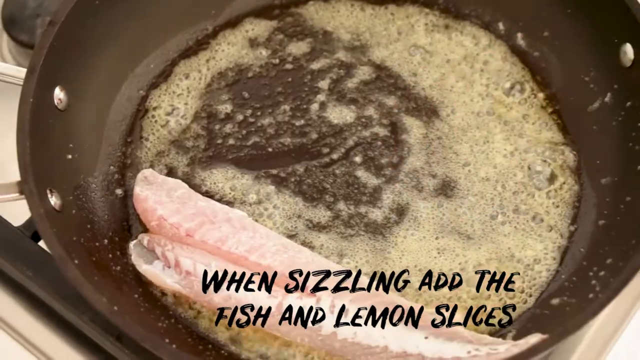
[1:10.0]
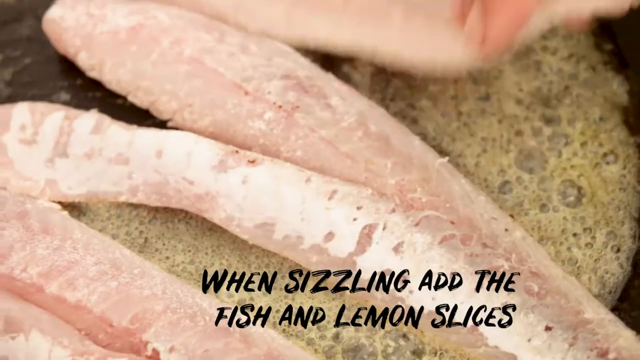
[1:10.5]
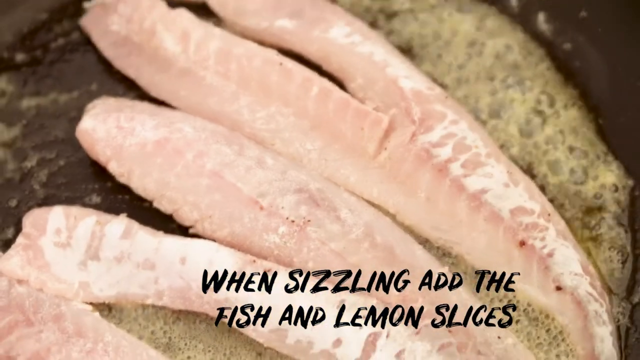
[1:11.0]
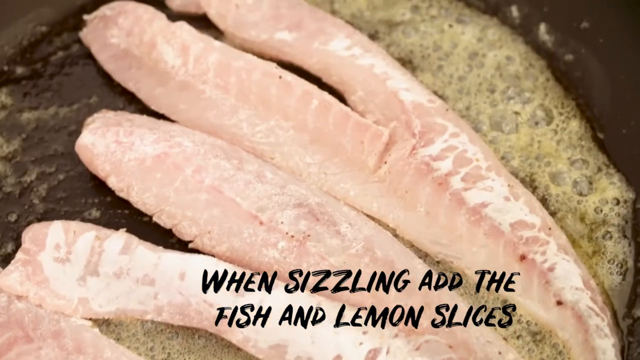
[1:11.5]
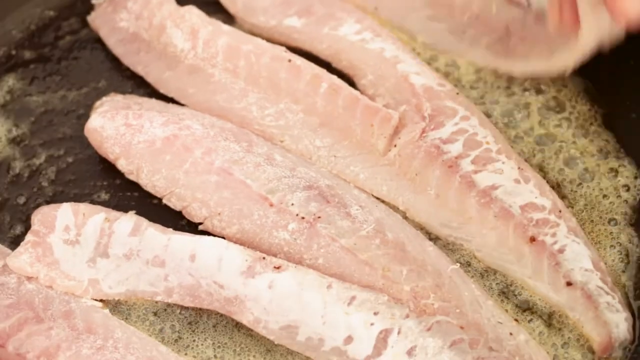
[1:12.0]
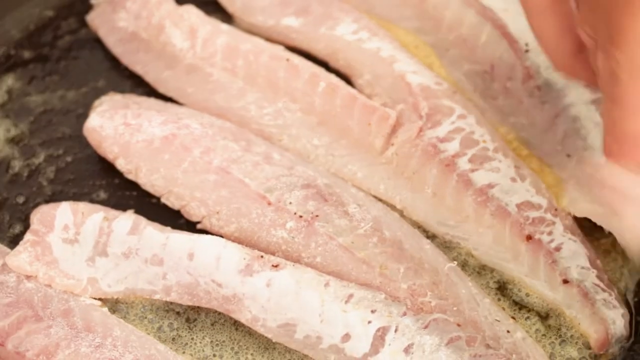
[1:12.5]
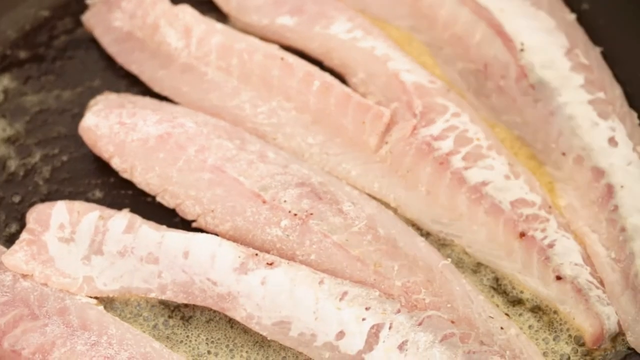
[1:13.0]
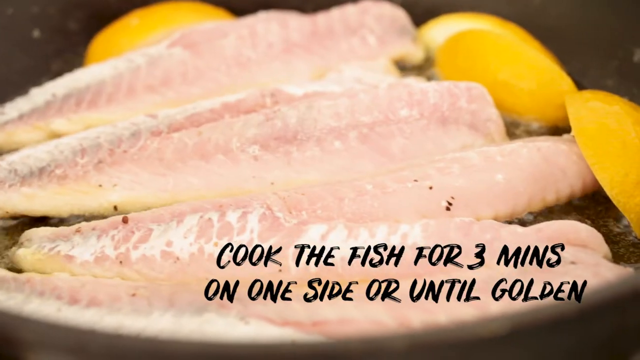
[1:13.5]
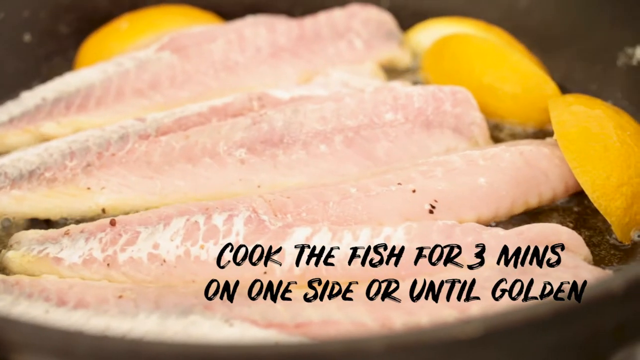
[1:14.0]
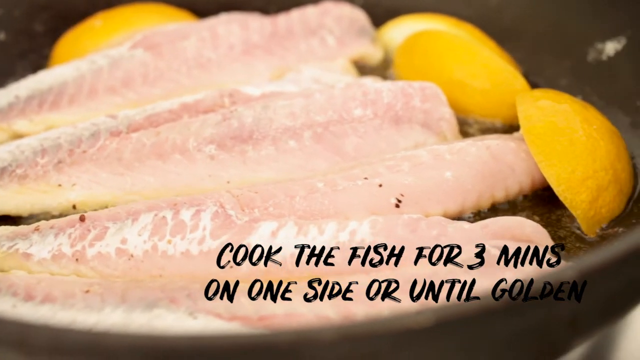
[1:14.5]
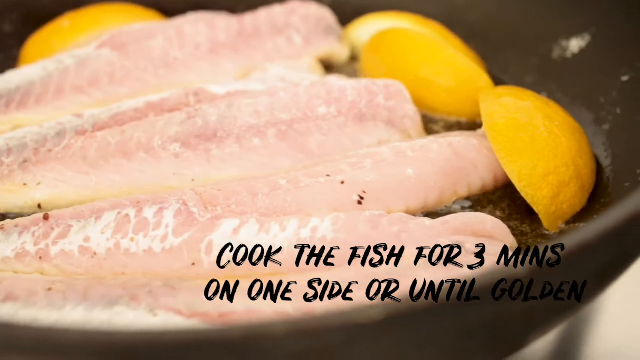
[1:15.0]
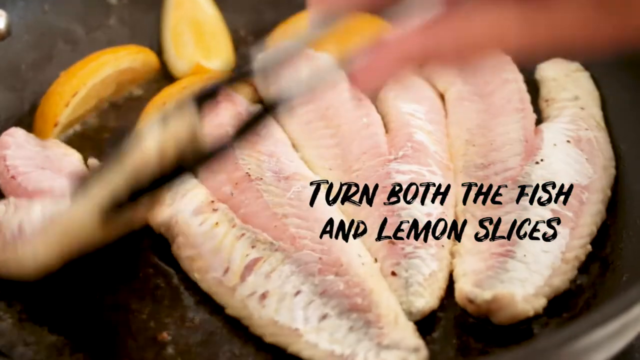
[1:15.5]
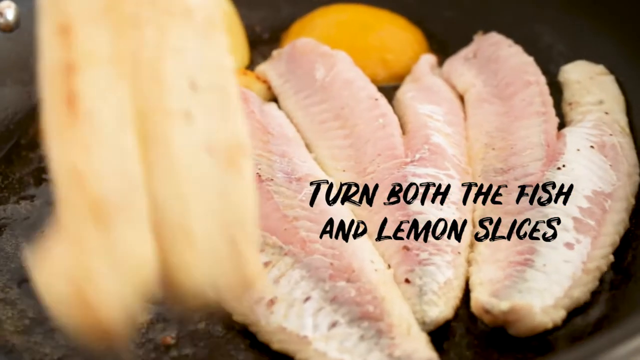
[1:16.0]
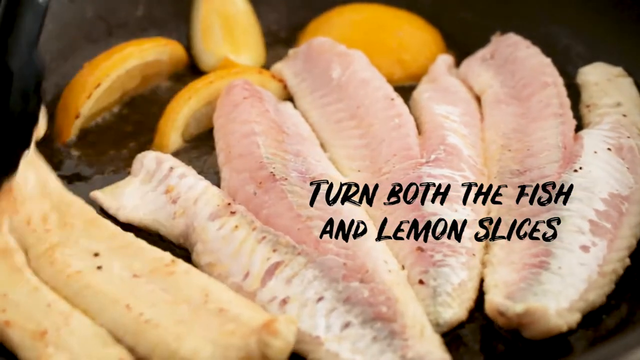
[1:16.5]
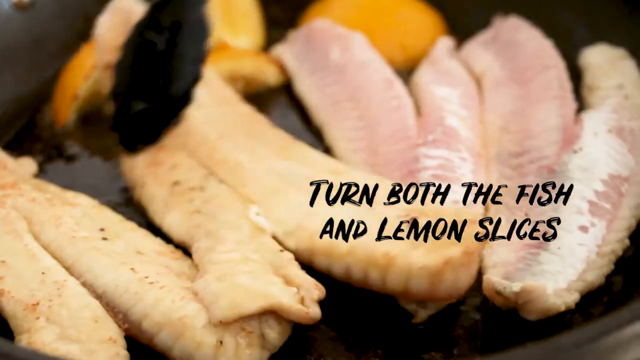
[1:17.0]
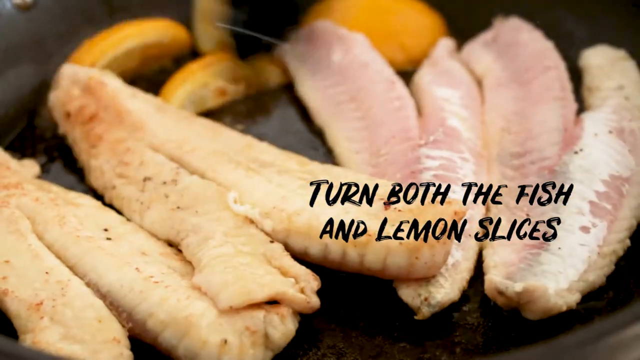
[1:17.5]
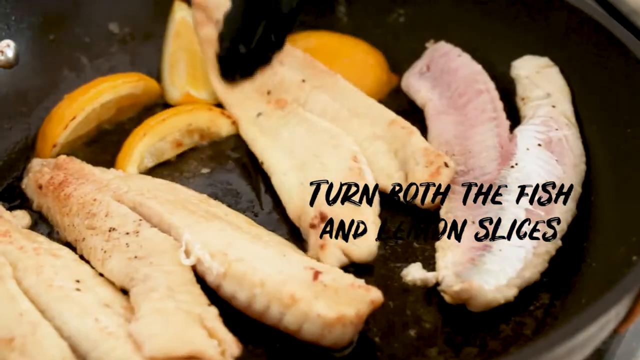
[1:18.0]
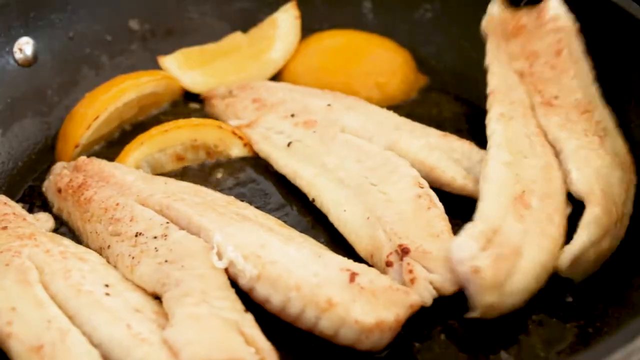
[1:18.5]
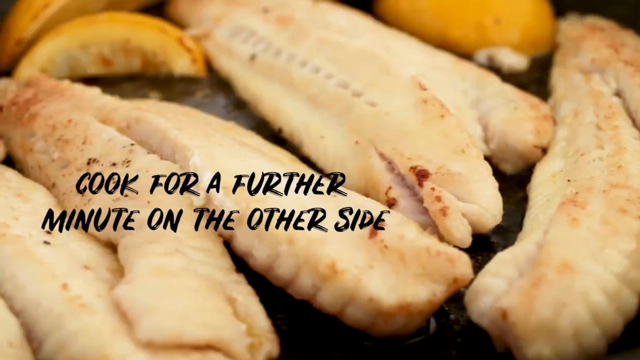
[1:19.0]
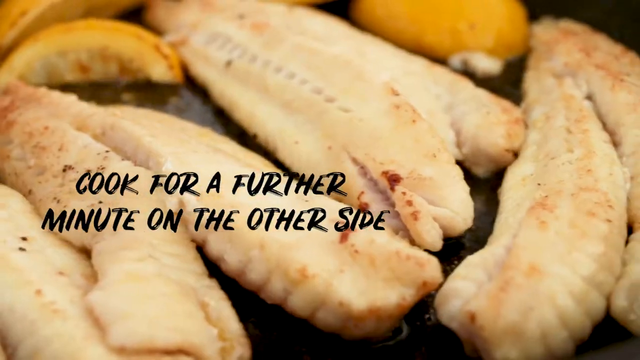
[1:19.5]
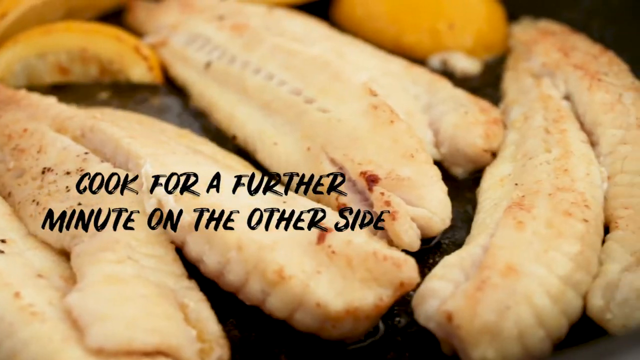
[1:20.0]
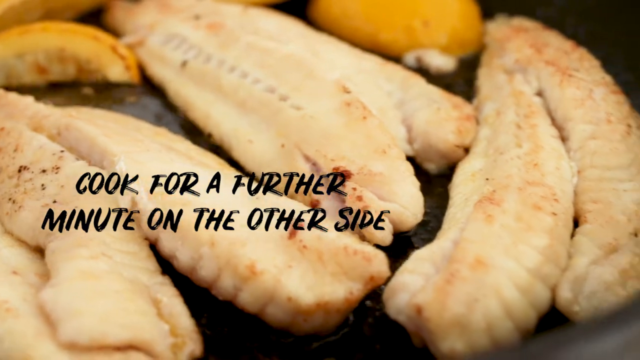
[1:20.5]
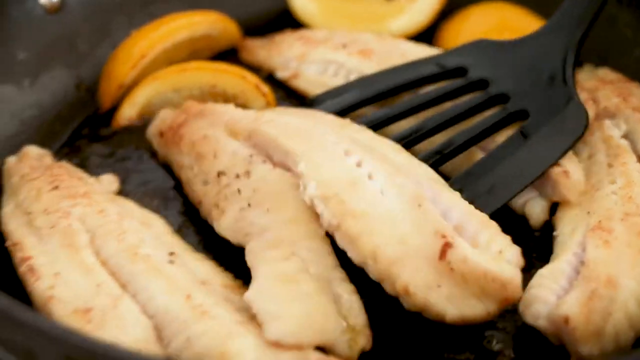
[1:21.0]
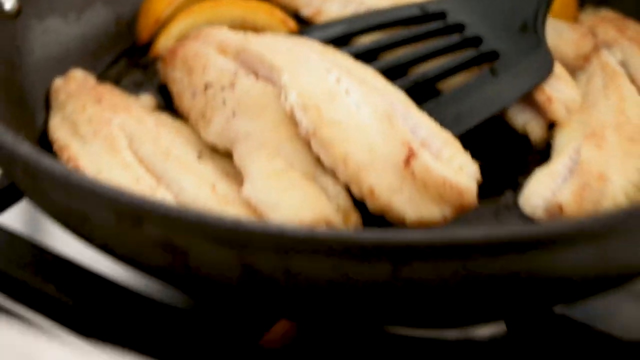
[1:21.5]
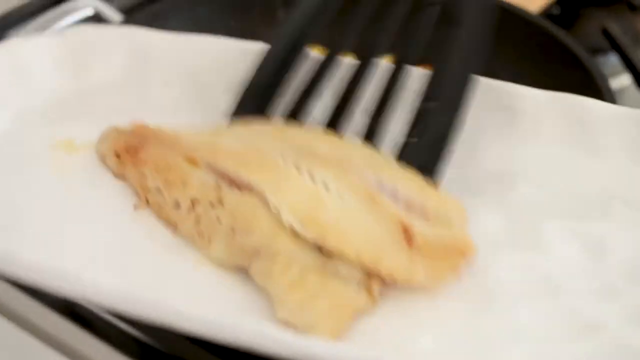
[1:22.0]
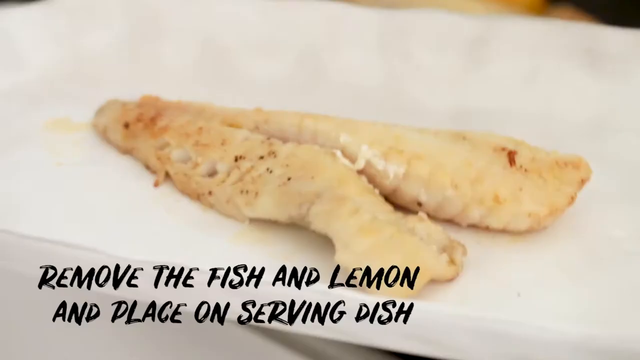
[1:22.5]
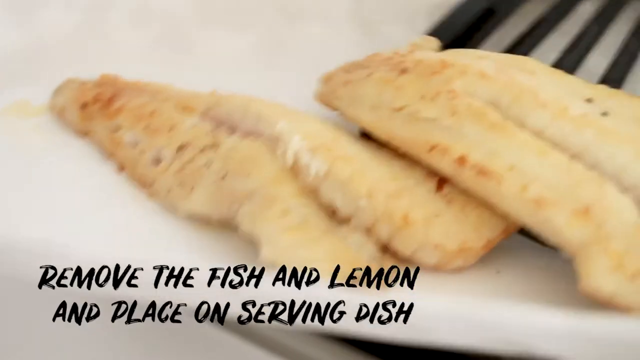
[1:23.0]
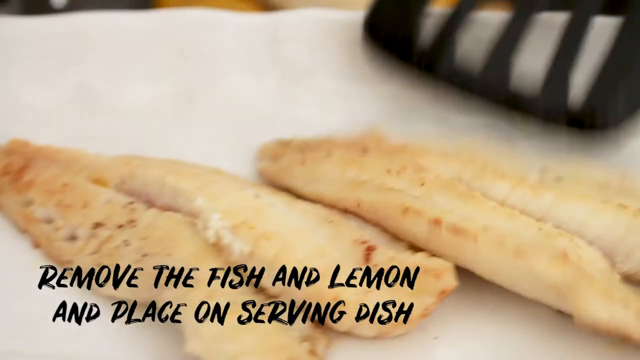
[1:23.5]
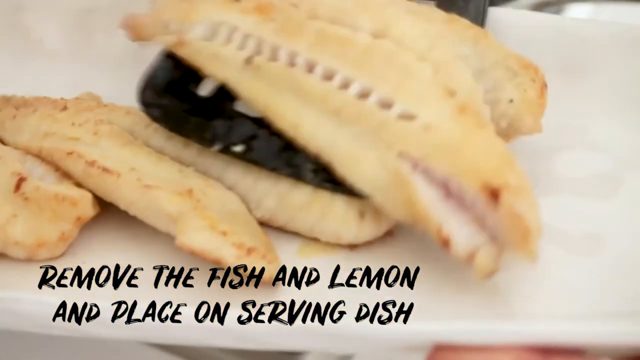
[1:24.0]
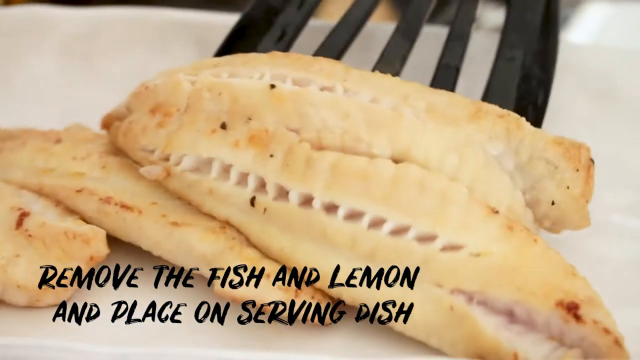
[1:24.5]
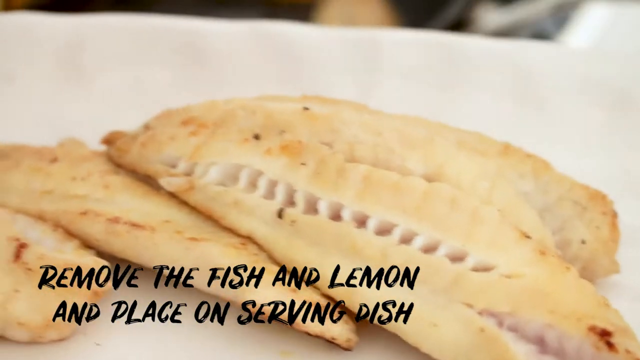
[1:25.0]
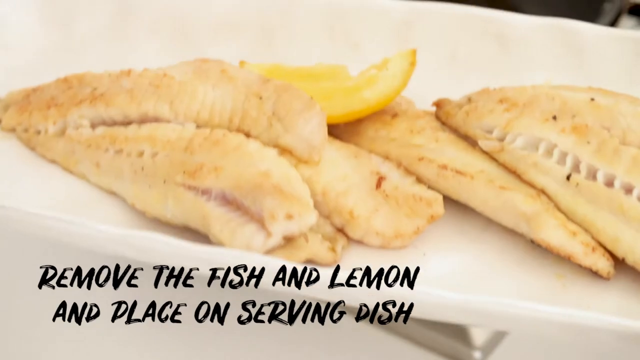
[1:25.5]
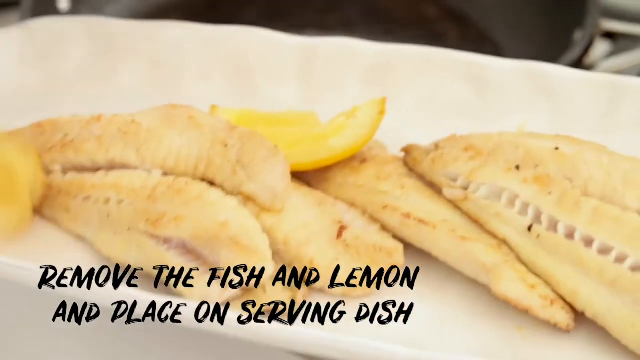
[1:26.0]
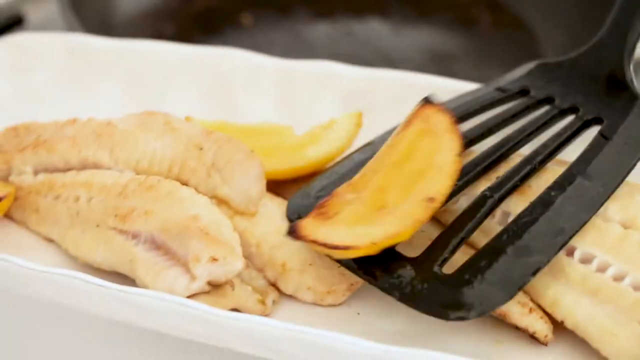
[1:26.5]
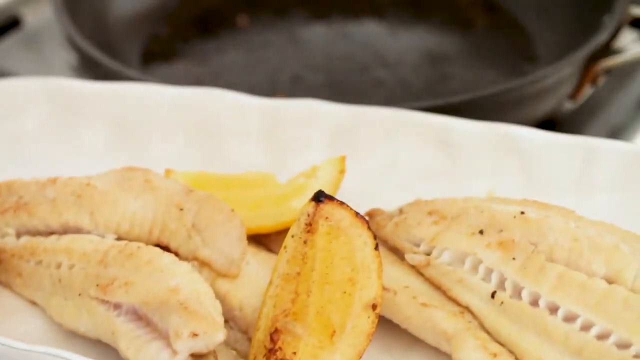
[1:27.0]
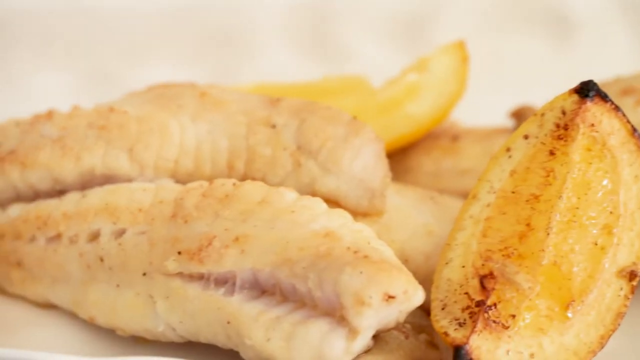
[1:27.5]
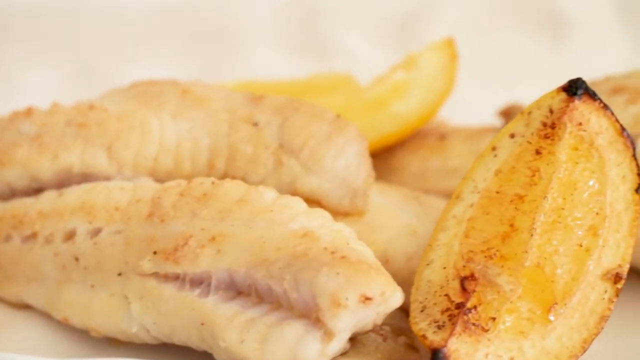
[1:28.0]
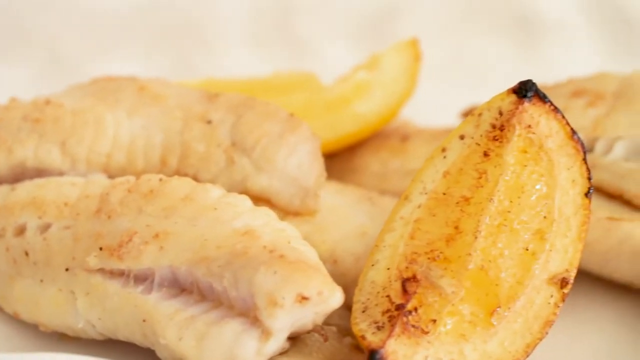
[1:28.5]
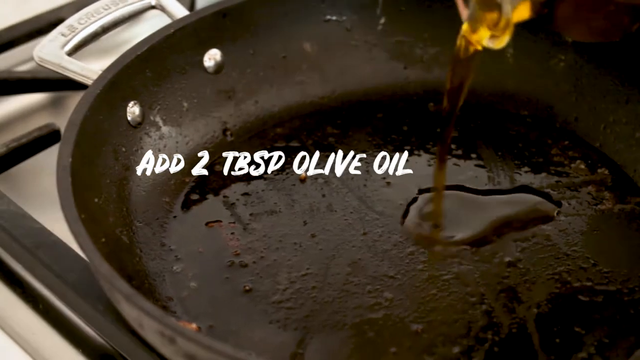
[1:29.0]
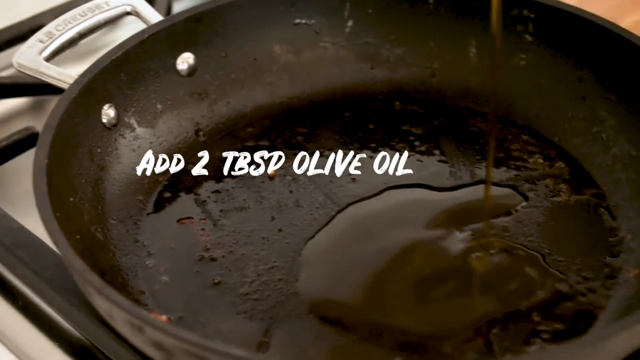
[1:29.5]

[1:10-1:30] Janine is still frying the fish fillets in the pan, and she has added slices of lemon. Instead of the spatula, she uses a fry holder to flip the fish fillets as they fry in butter. She fries them for a couple more minutes, then removes the fish and lemon and places them in a serving dish. She adds two spoons of olive oil to the same pan and crushes what looks like a ground spice to add to the pan.